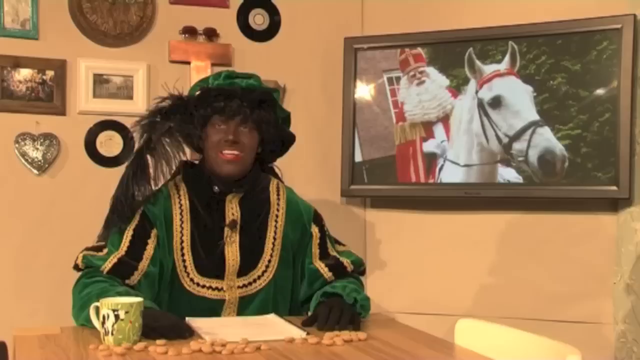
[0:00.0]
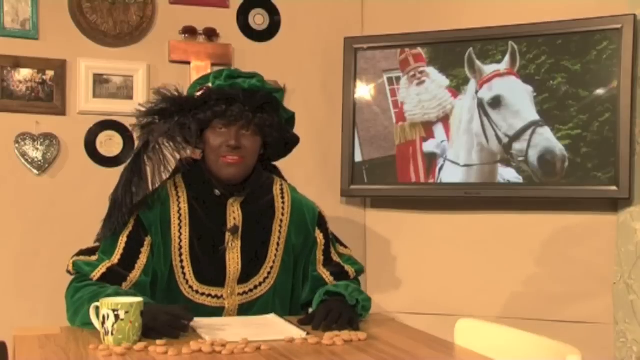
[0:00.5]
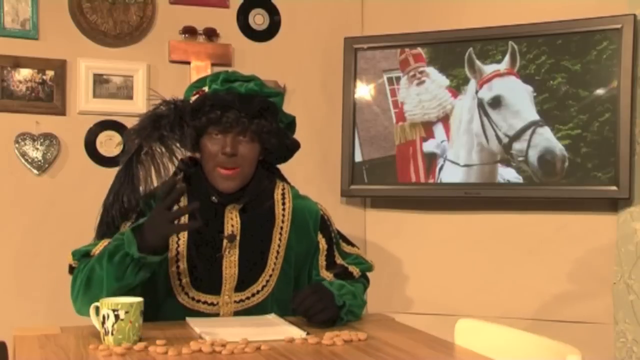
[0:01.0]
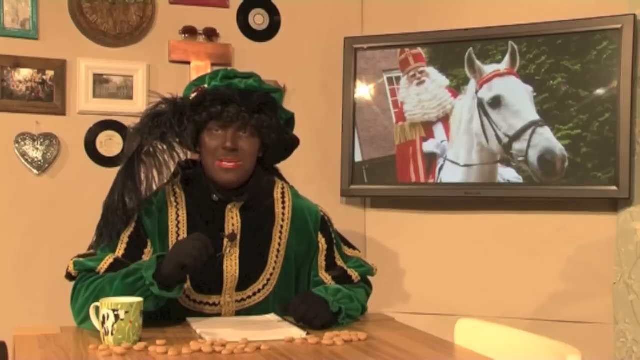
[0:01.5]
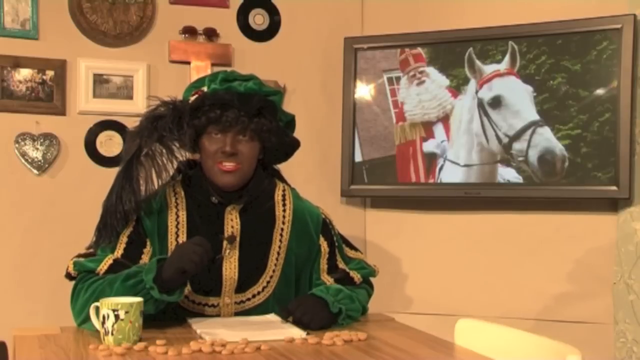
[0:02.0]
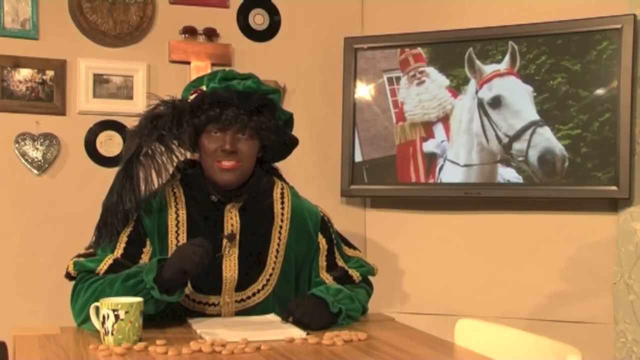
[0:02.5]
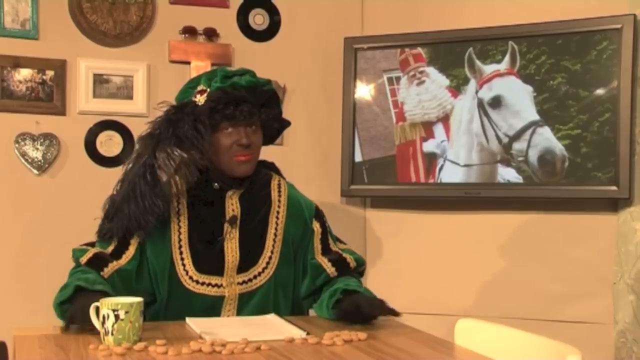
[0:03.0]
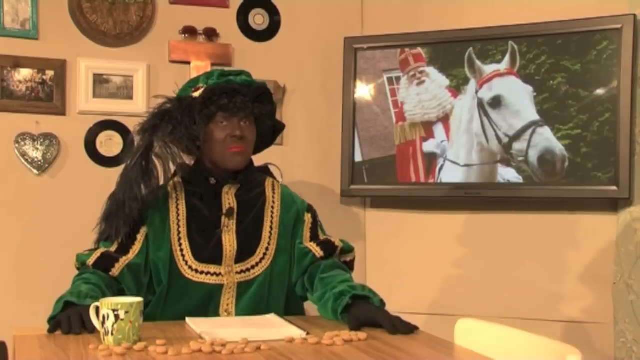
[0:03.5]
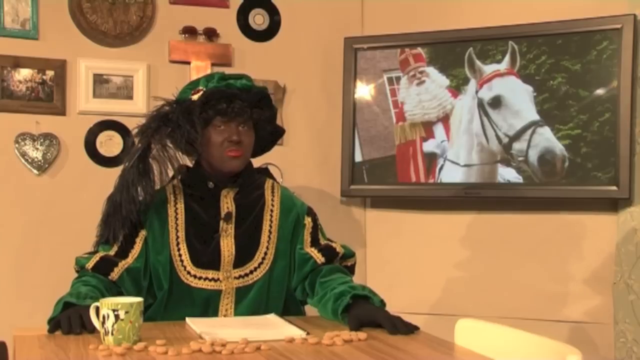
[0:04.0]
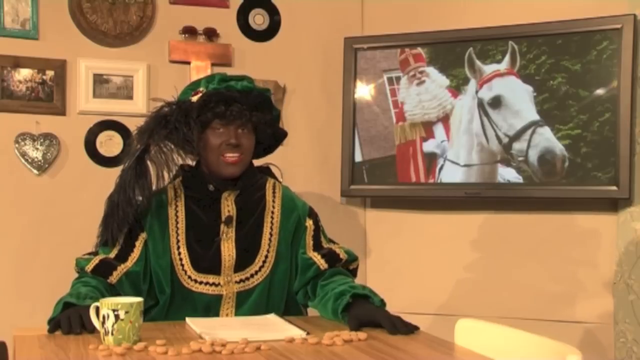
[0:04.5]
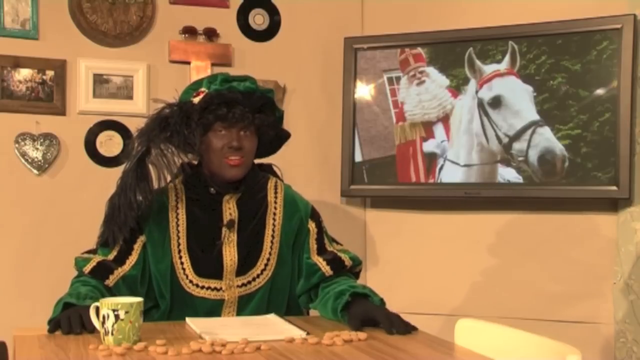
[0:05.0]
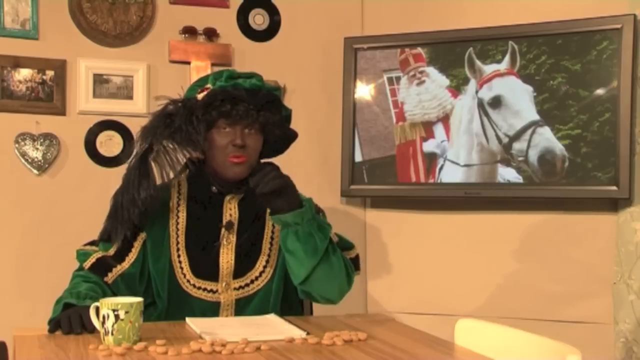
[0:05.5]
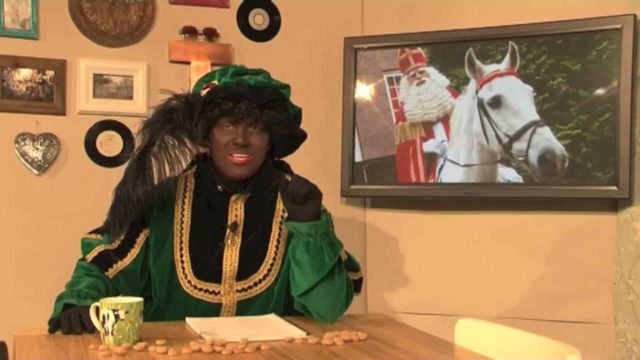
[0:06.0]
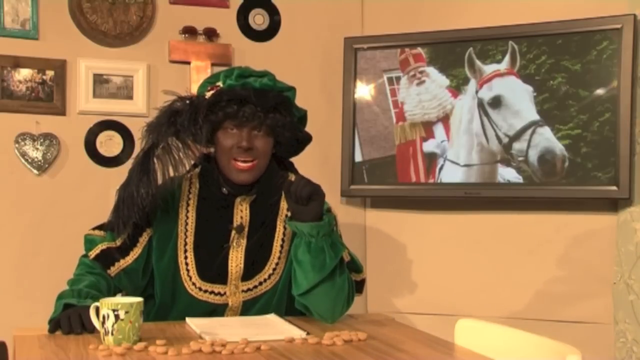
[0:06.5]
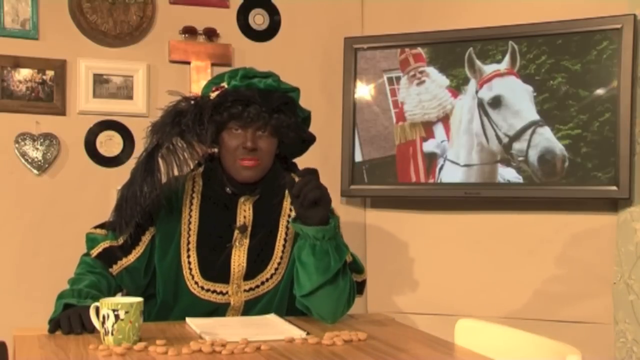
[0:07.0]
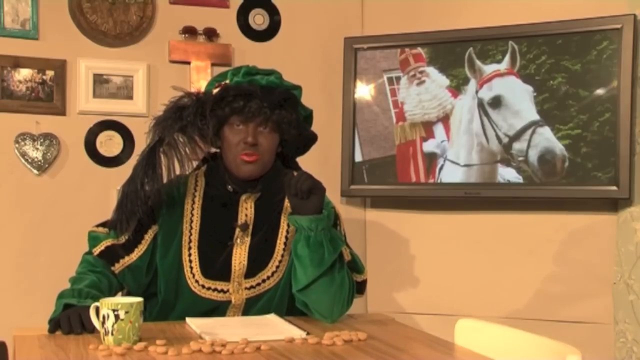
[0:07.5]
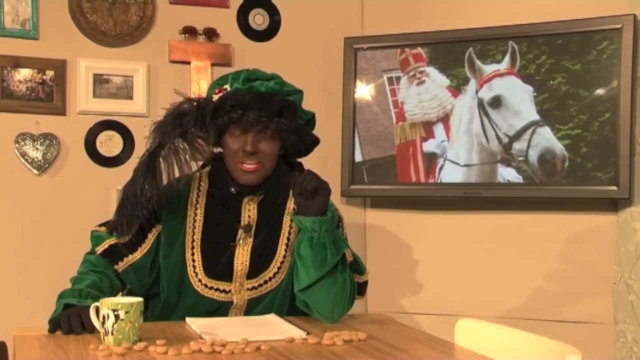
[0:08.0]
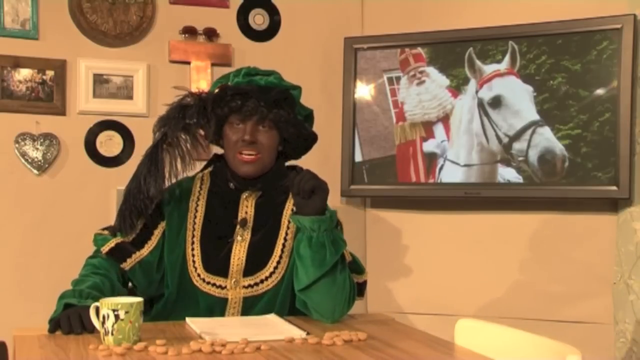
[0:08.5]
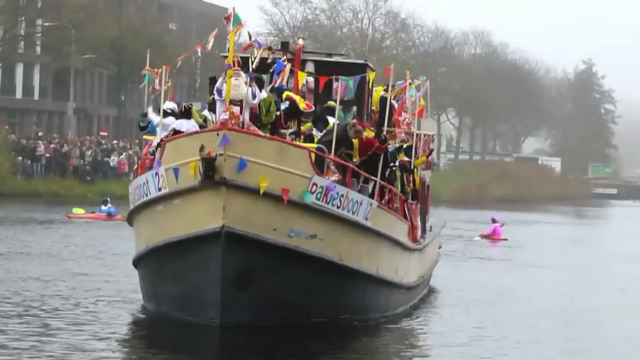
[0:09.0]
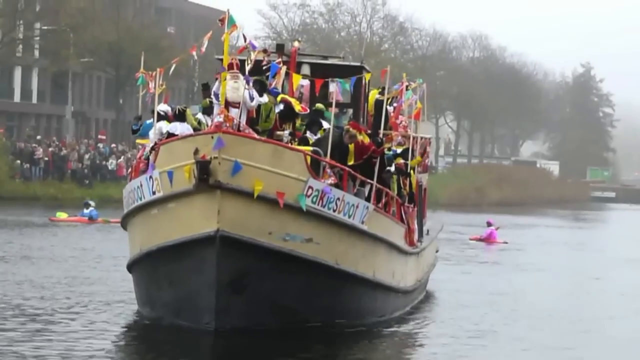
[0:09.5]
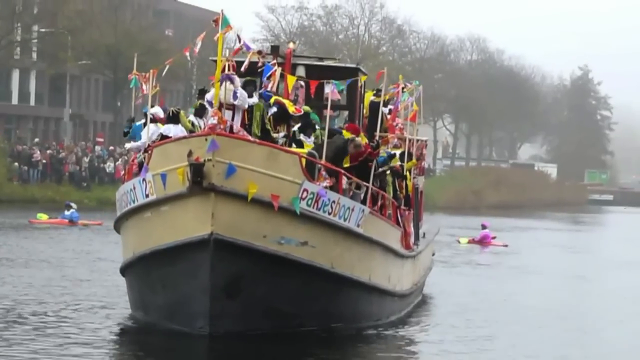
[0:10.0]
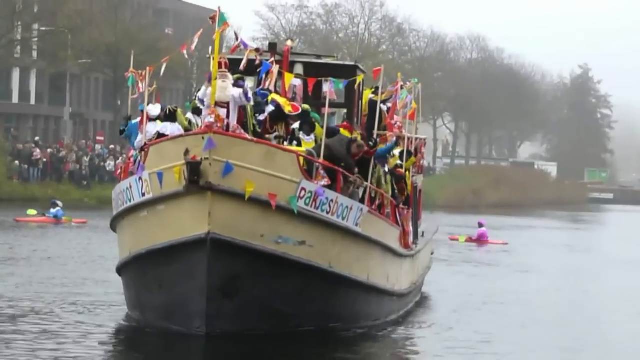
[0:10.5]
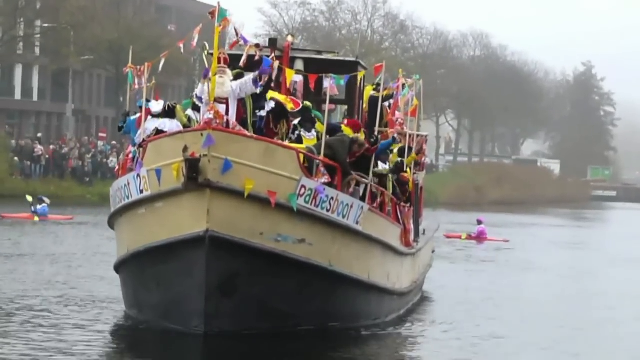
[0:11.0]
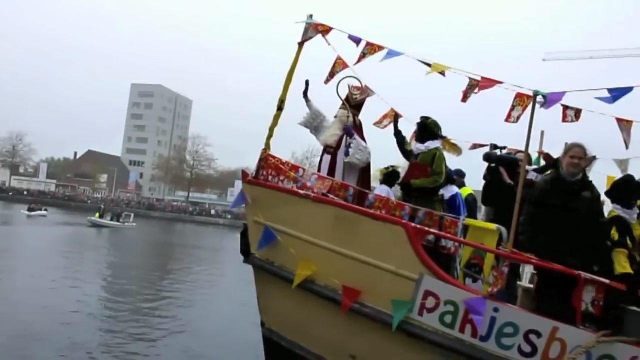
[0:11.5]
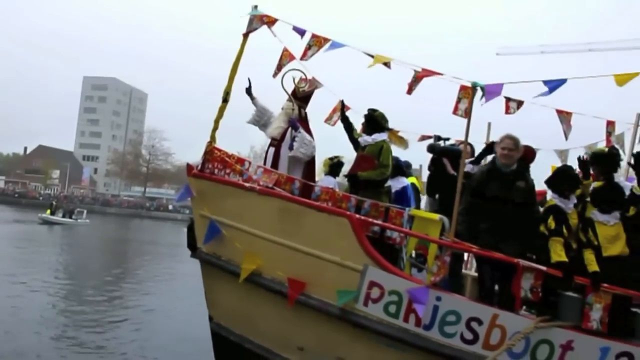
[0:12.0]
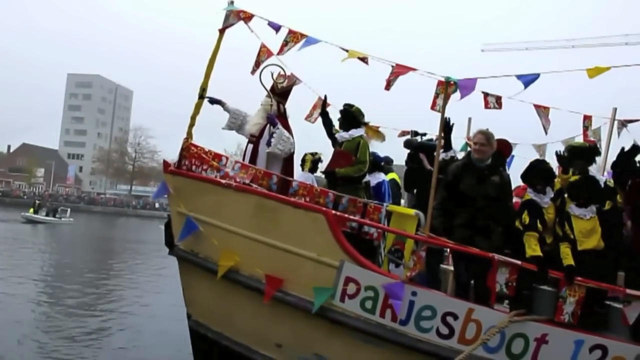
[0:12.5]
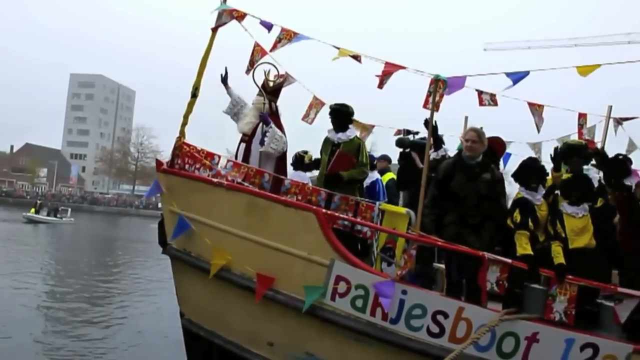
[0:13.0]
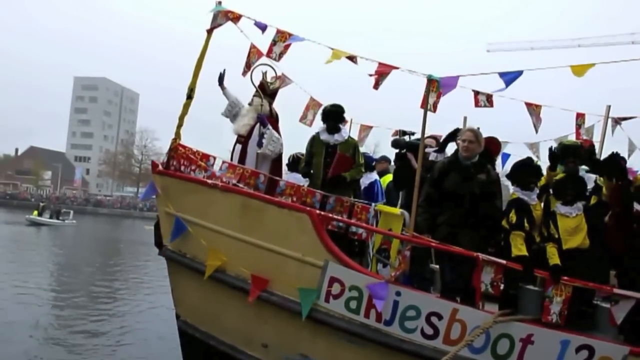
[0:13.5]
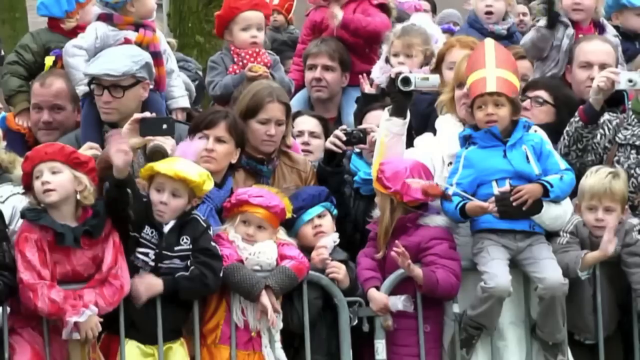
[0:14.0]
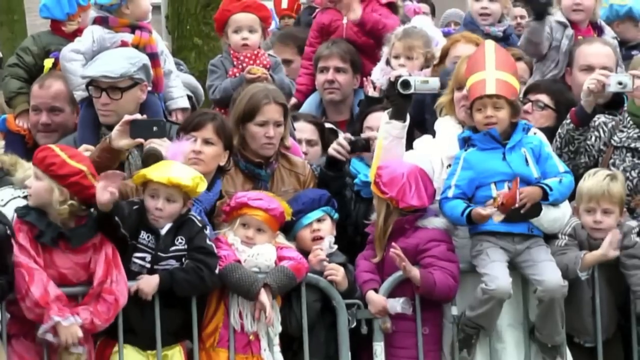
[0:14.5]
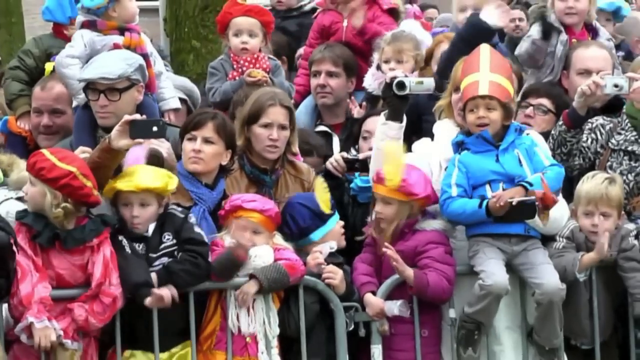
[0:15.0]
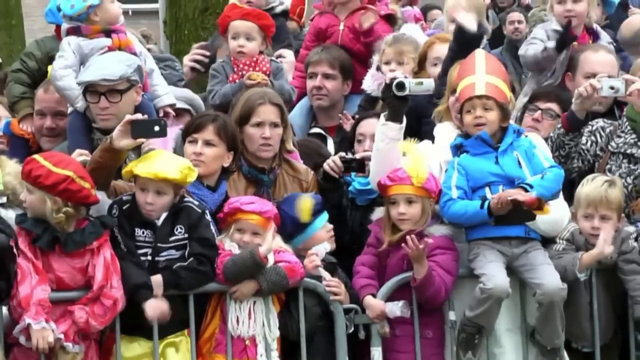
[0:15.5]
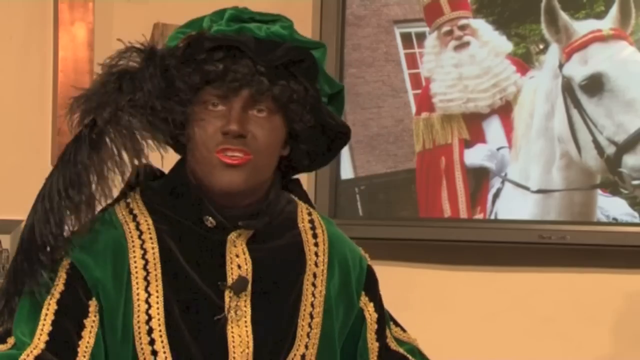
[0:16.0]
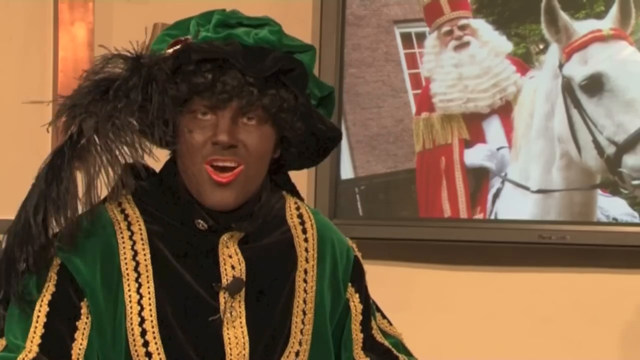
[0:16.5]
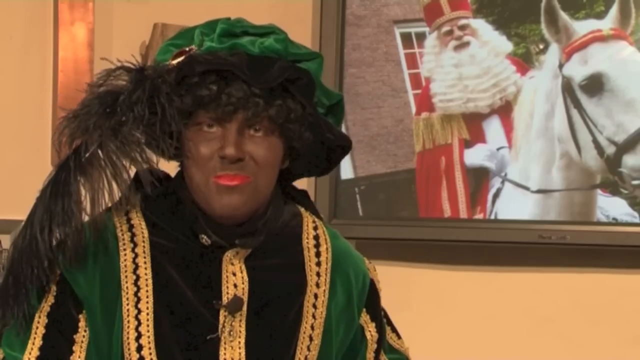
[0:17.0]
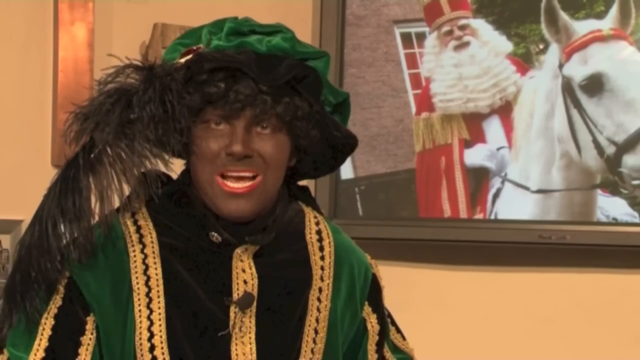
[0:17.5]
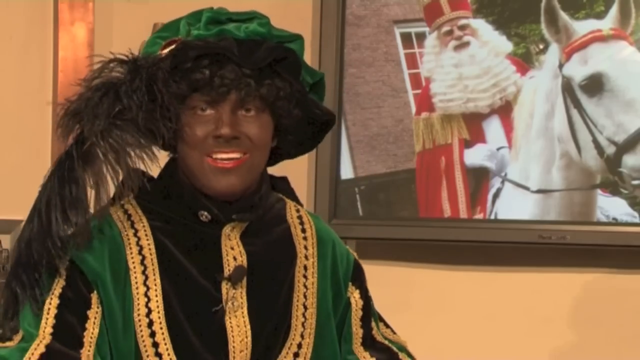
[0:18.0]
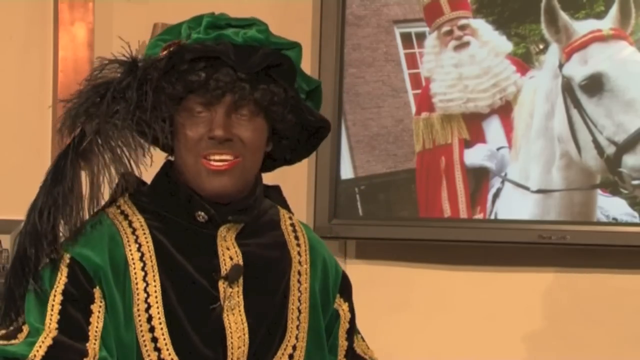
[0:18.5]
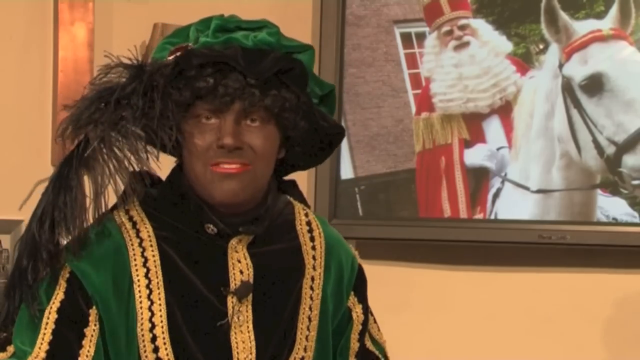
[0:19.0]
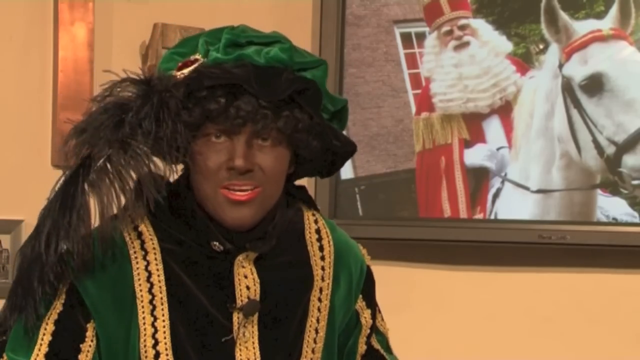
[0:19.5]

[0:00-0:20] In a slightly wide frame, a Black person sits at what appears to be a desk, speaking toward the camera. They are on the left side of the frame with their torso facing the viewer, and the desk is right in front of them at the very bottom of the frame. They are dressed in a medieval-like way: a green shirt or robe with black and gold accents, and a green hat that is black underneath around the brim, with a big black feather coming off the side. Behind them on the right-hand side, a TV mounted to the wall shows a paused image of Santa riding a horse. The video then transitions to a new scene of a boat moving through a waterway, carrying several people dressed in different medieval costumes. The person at the front of the boat is dressed more like a magician and holds a big staff in his left hand. Others wear various attire, such as a black cape around one individual. They seem to be waving toward a crowd at the side. The camera then zooms in on this crowd, where some people are dressed up and some are not, and there are lots of kids.